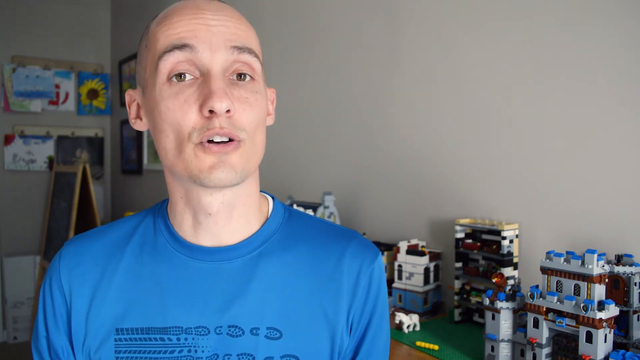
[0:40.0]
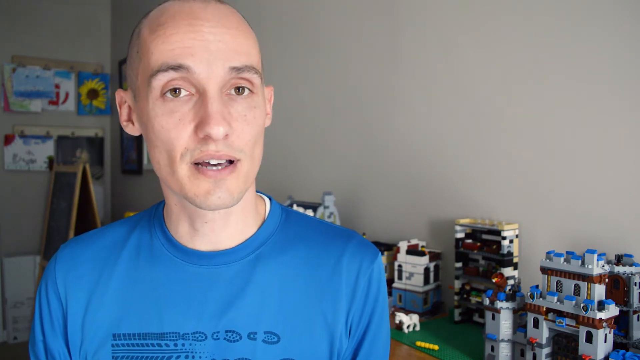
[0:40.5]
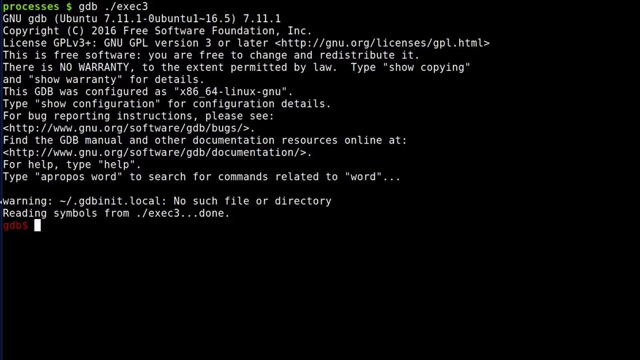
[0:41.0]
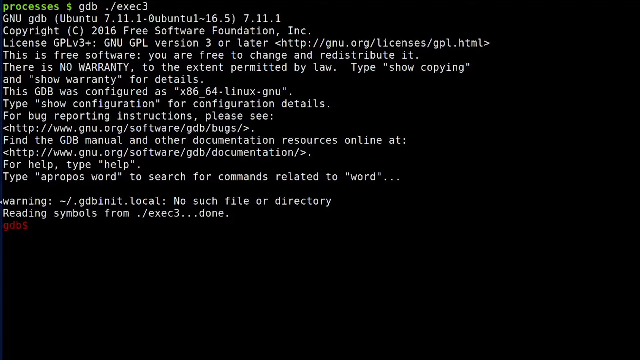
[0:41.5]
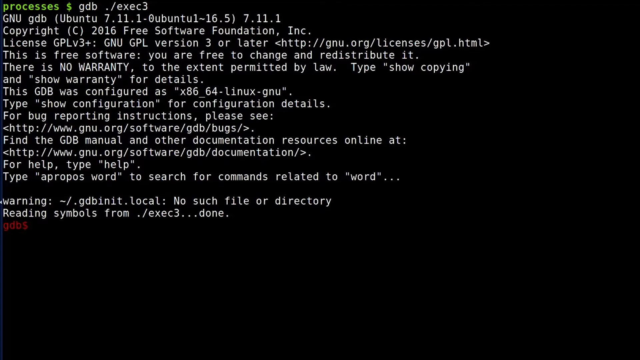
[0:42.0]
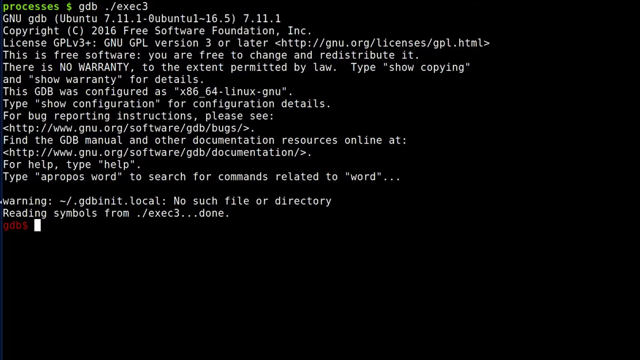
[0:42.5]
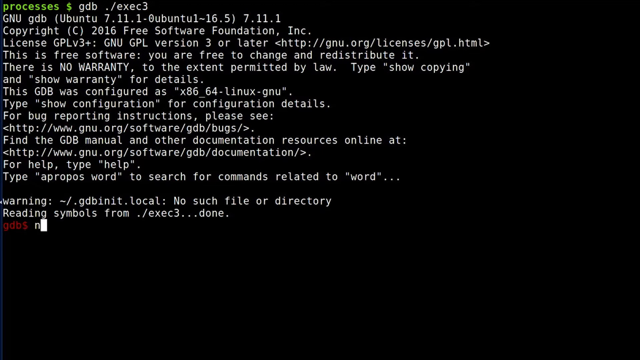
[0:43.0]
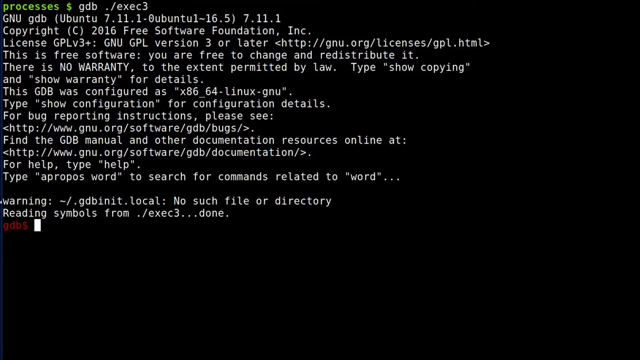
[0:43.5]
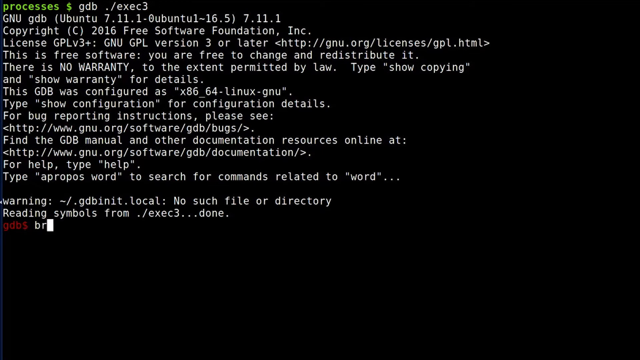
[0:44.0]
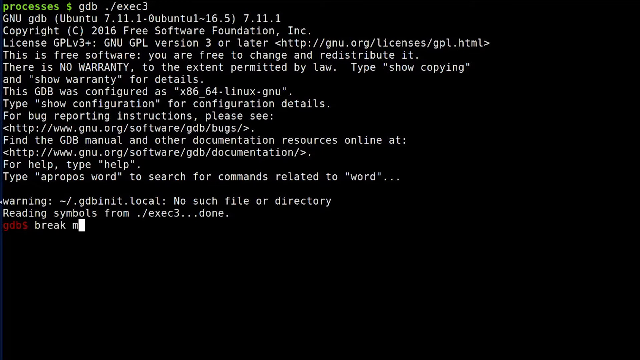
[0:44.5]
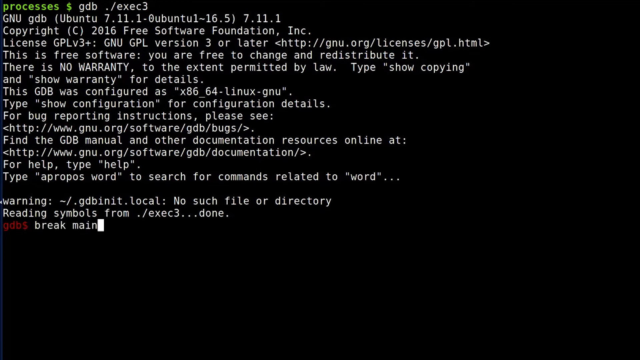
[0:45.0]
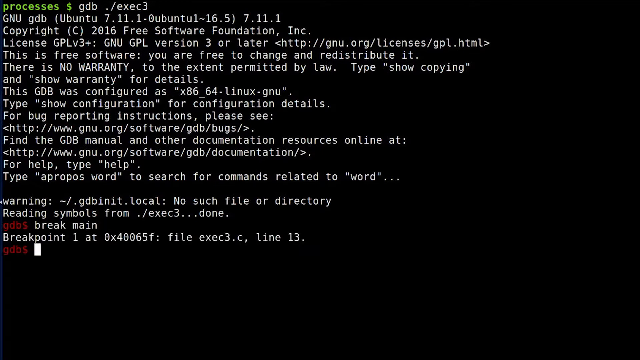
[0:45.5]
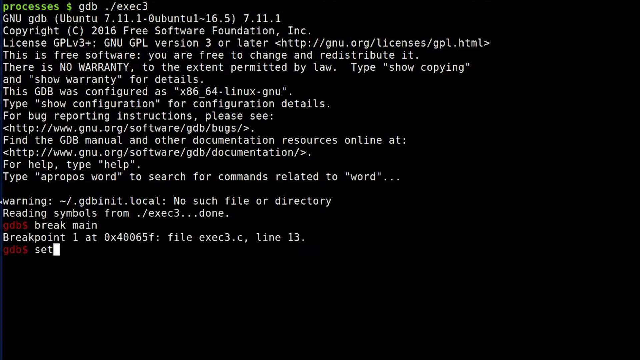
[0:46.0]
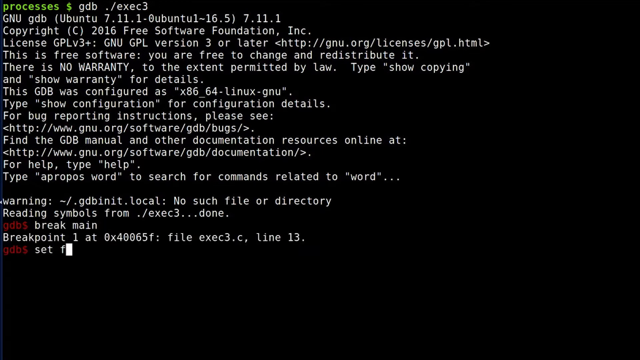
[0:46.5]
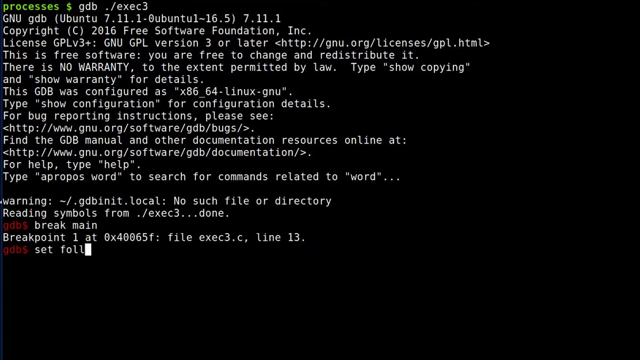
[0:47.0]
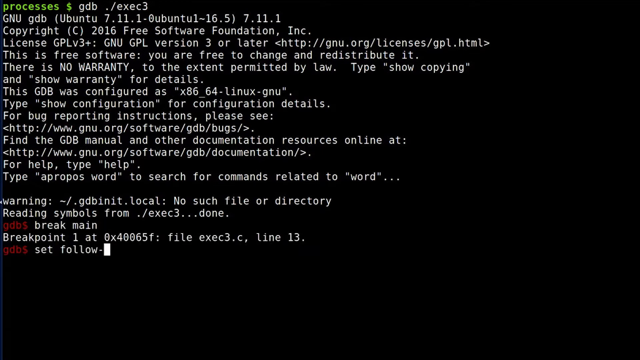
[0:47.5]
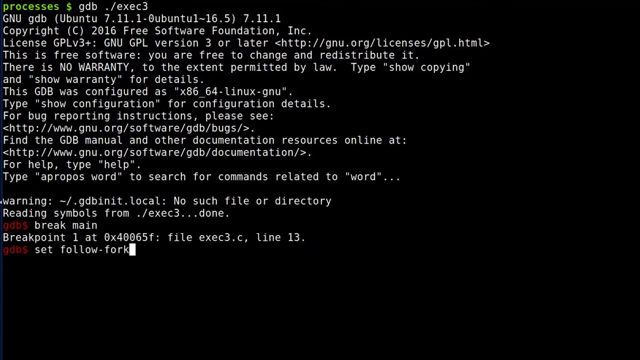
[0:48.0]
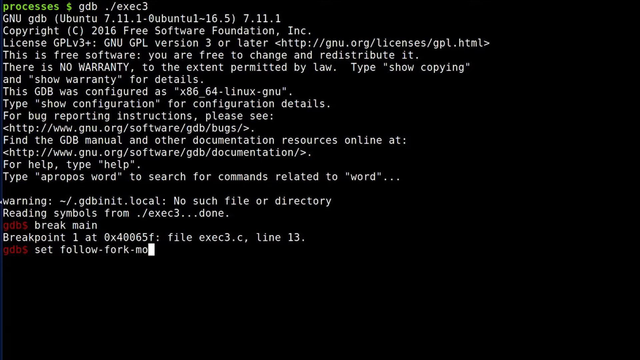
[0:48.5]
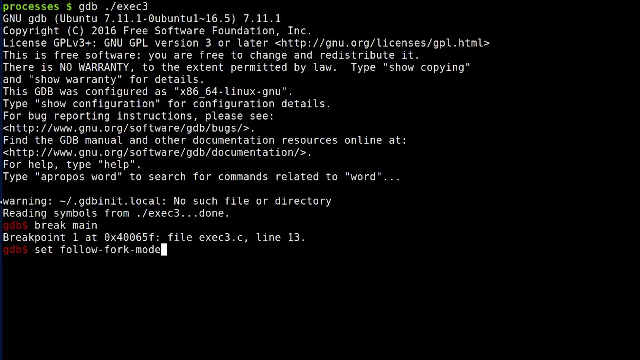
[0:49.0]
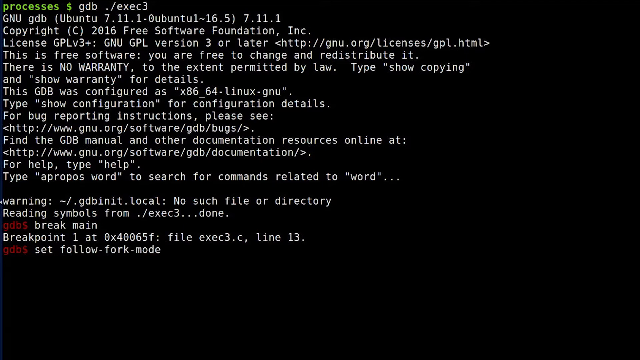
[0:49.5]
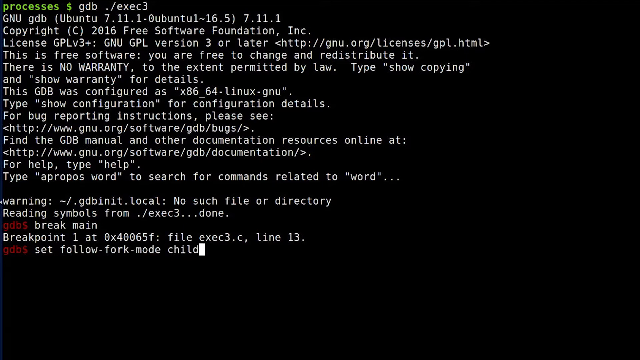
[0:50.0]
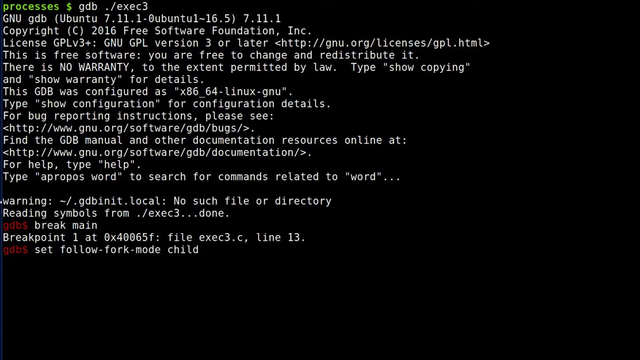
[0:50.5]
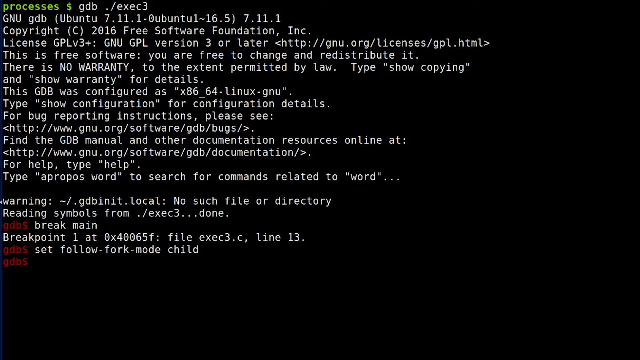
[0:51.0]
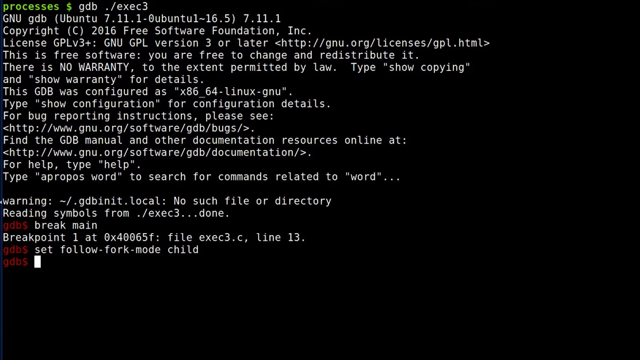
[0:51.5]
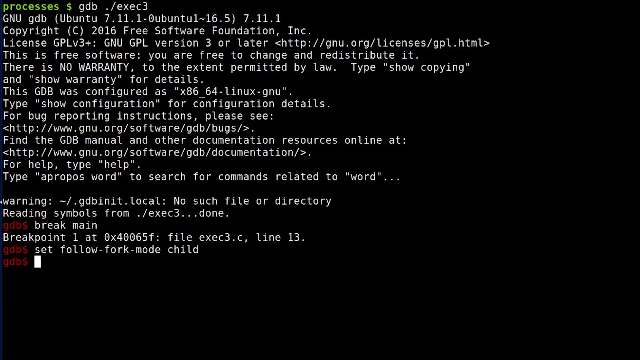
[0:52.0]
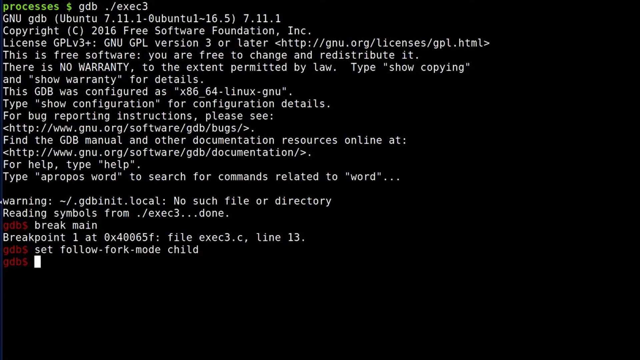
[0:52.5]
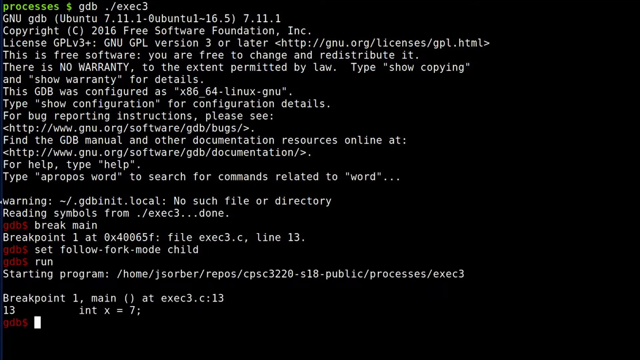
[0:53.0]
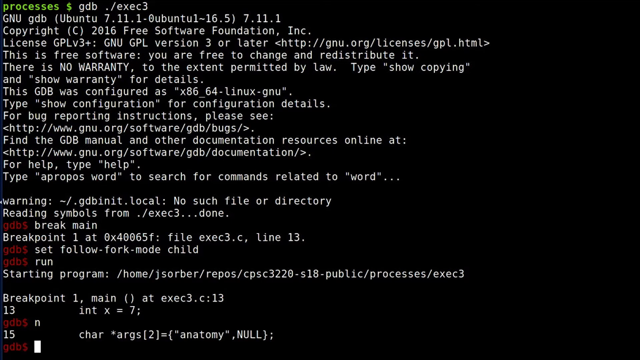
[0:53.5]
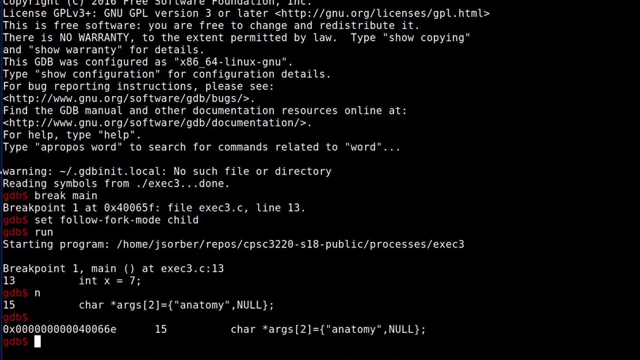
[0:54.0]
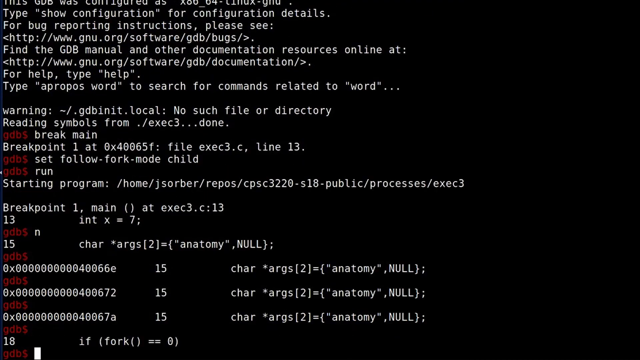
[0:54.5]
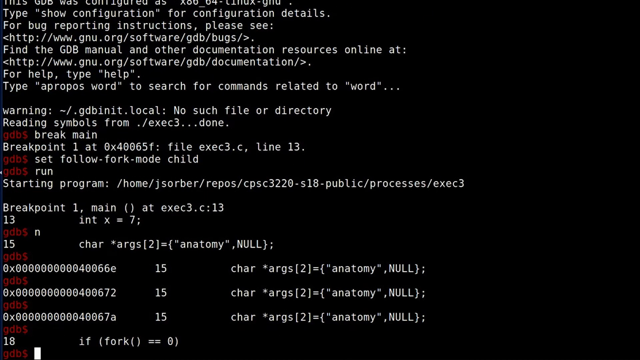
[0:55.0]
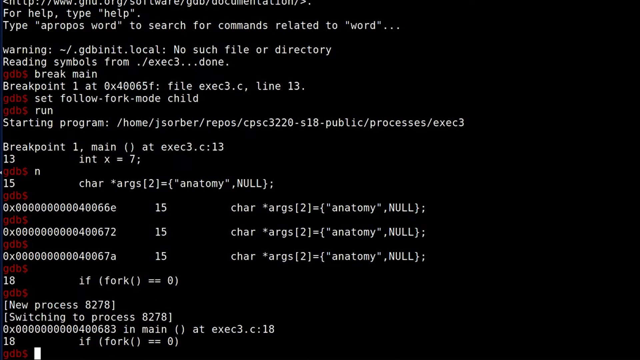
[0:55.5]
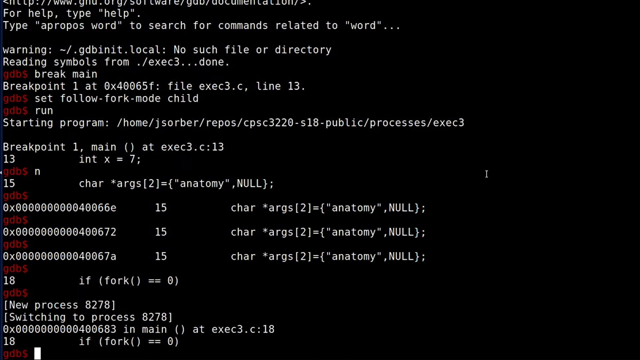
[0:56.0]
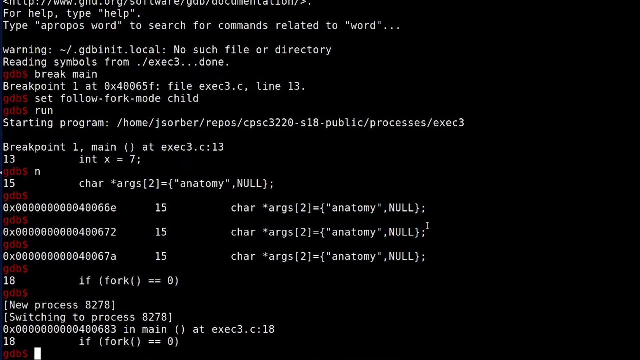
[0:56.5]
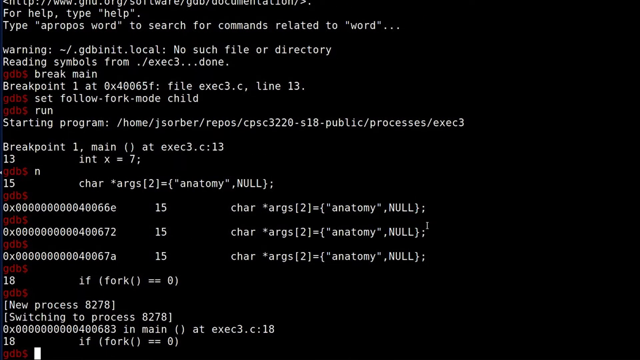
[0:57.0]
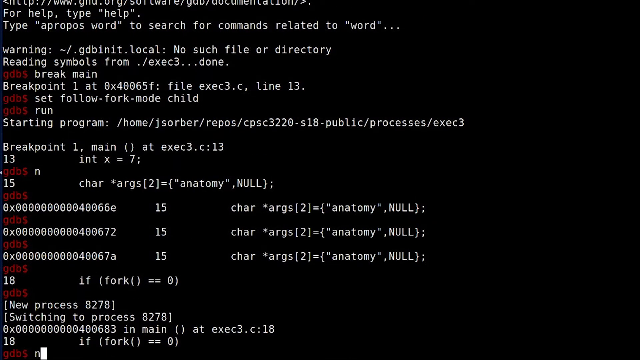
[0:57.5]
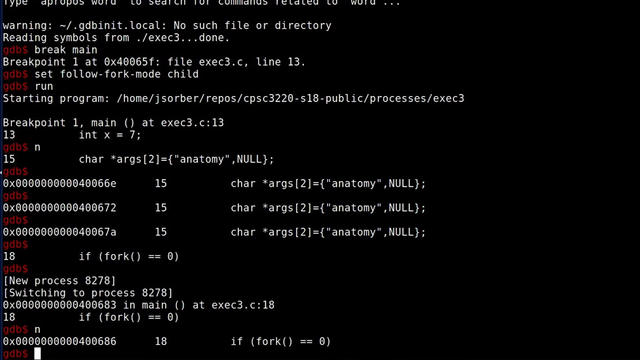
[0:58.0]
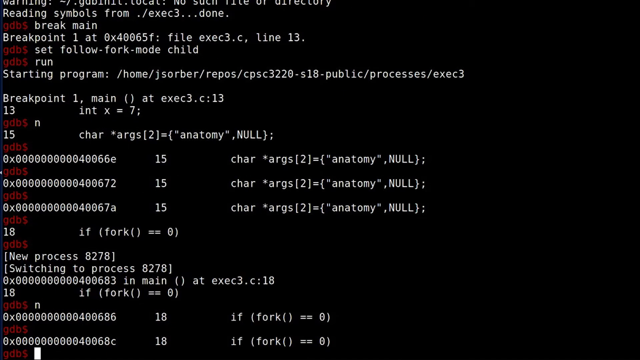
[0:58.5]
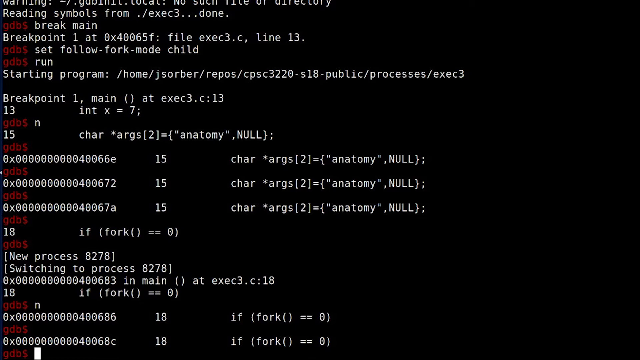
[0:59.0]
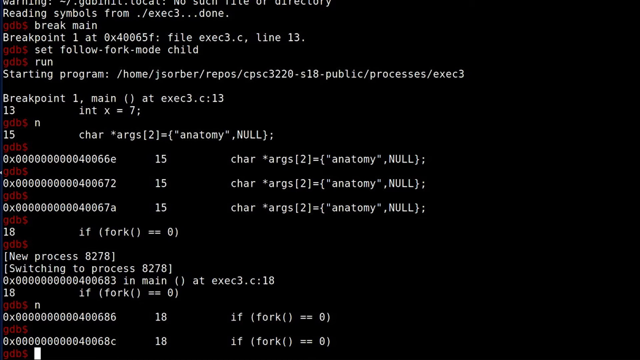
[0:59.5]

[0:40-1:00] A man of white descent in a blue shirt is sitting in a room. On the left, a few pictures hang on the wall, and on the right there are LEGOs on top of a brown table. He seems to be explaining coding concepts on the topic of debugging C programs that use fork and exec in GDB. On the right side of the frame, a GIF-like image pops up reading "clones!". As he continues, another GIF-like image pops up reading "zombie processes!", with a robot-like image in the background. Then a coding screen appears, where he is seen typing "break main" and a few lines of code appear. He then types "run", and the program seems to be running.